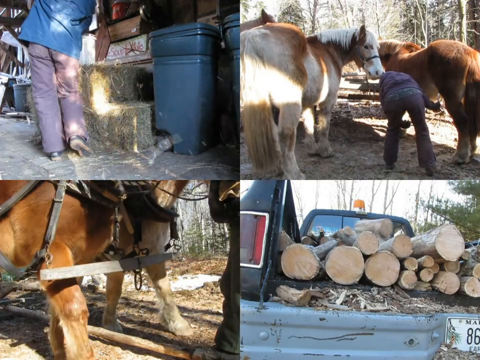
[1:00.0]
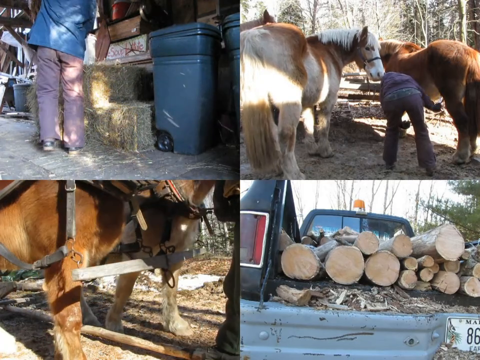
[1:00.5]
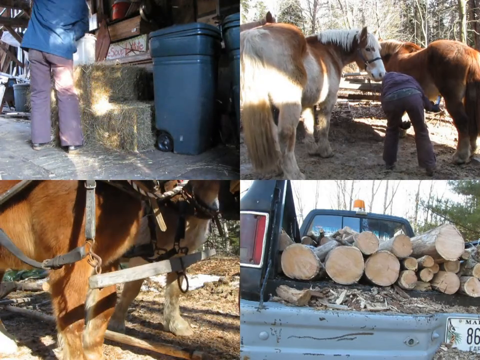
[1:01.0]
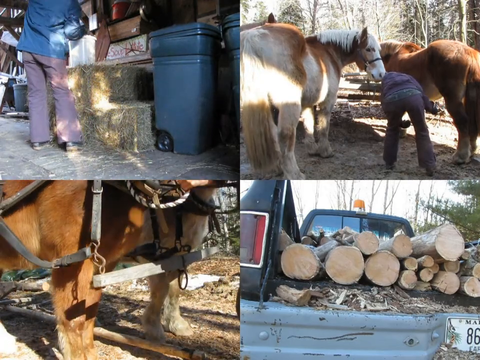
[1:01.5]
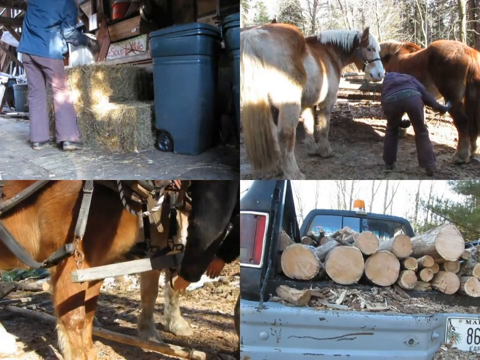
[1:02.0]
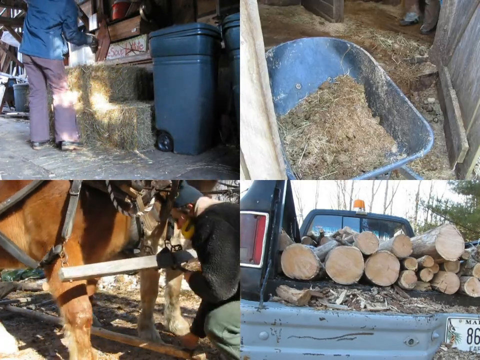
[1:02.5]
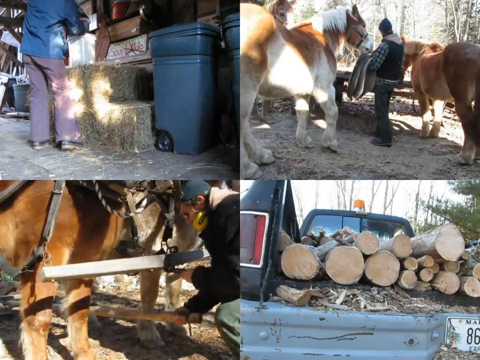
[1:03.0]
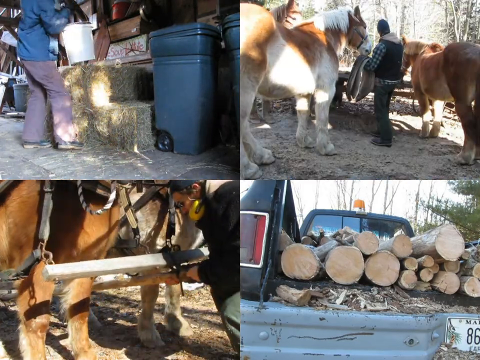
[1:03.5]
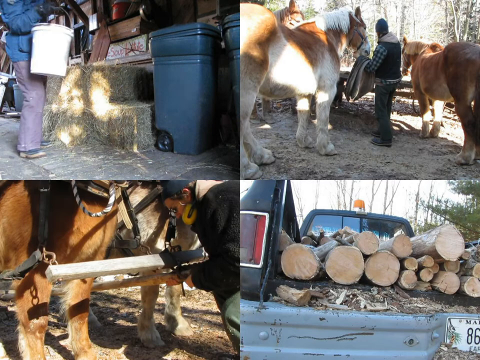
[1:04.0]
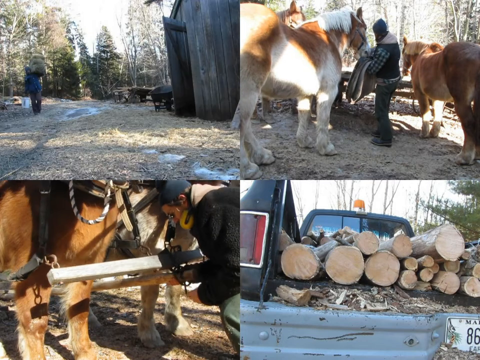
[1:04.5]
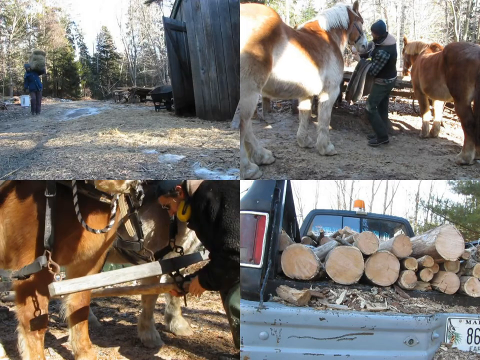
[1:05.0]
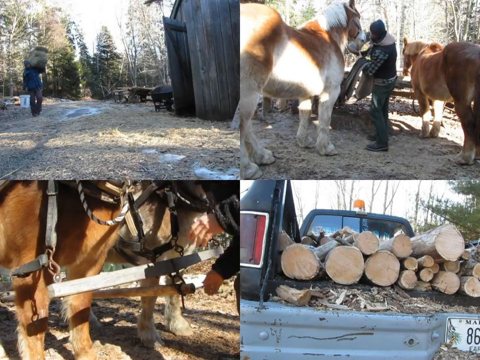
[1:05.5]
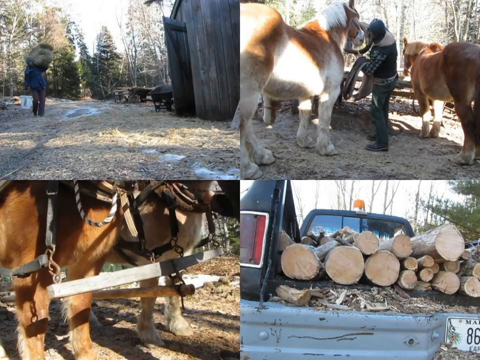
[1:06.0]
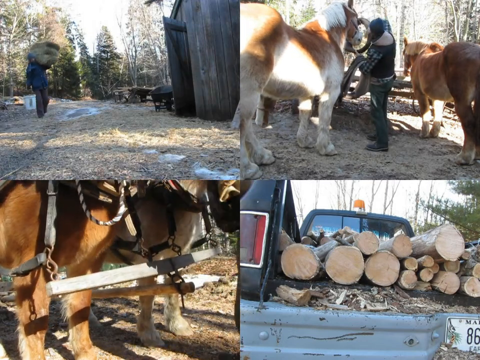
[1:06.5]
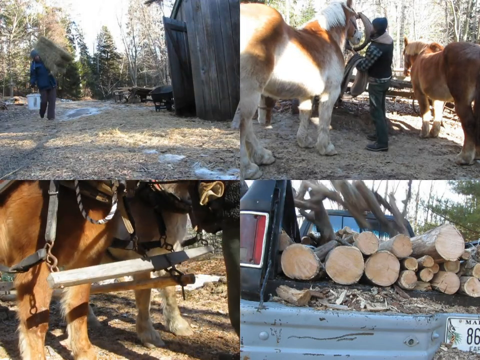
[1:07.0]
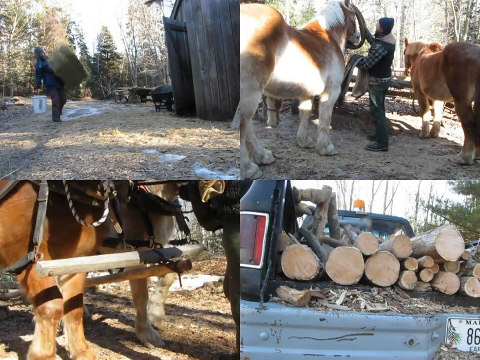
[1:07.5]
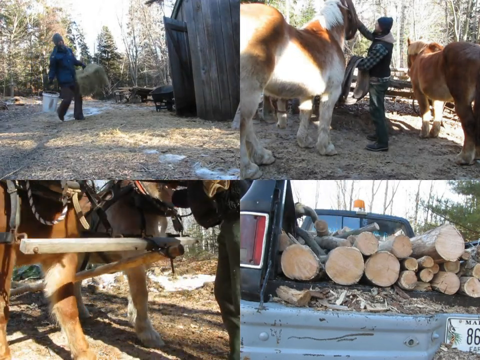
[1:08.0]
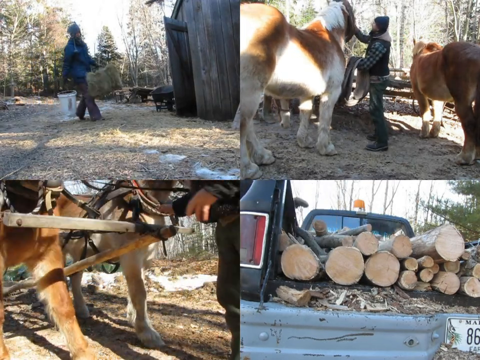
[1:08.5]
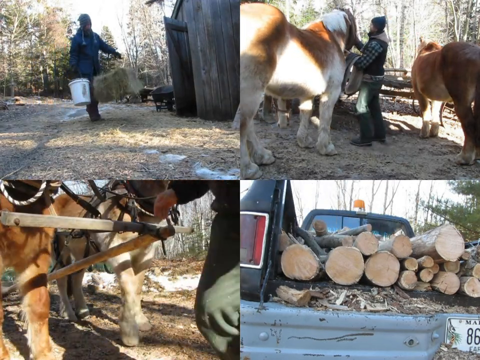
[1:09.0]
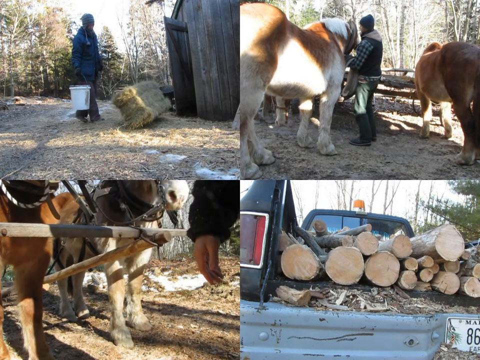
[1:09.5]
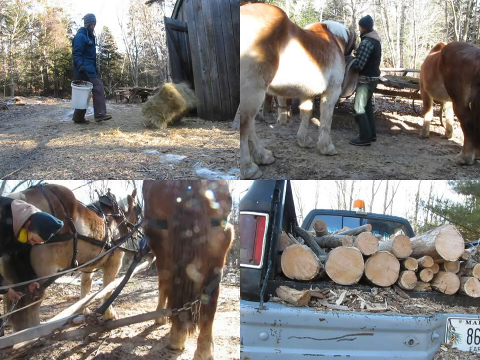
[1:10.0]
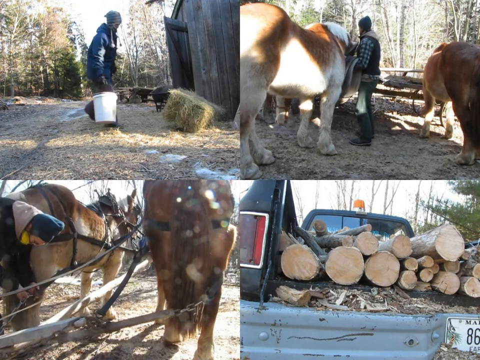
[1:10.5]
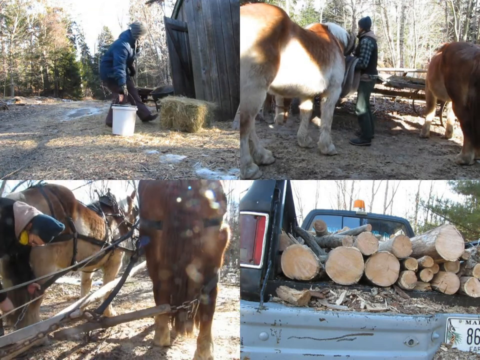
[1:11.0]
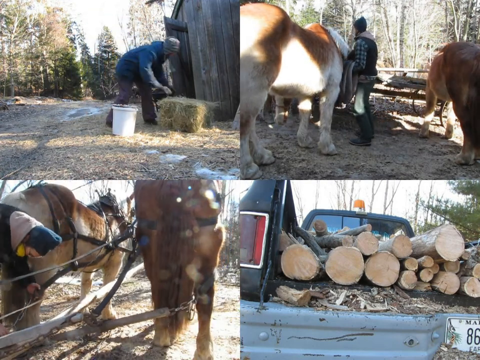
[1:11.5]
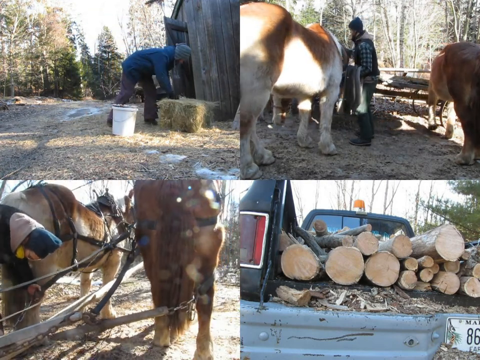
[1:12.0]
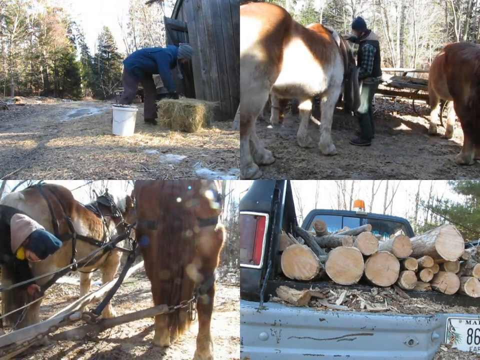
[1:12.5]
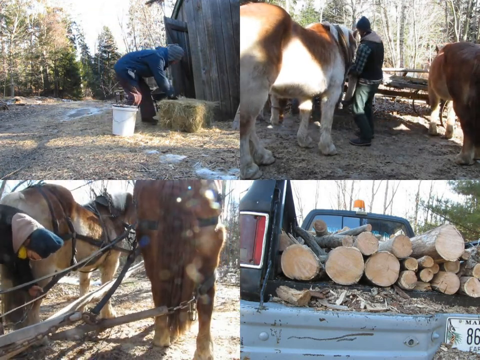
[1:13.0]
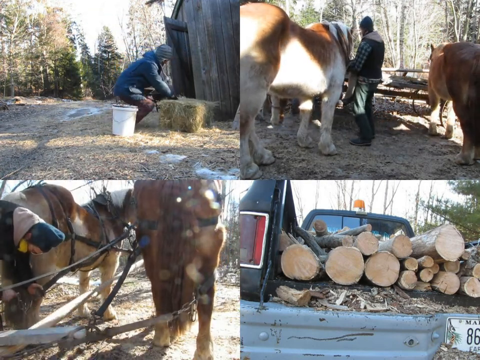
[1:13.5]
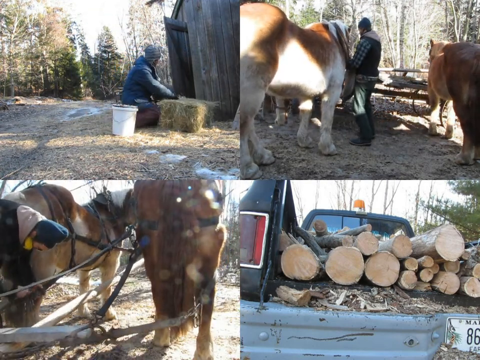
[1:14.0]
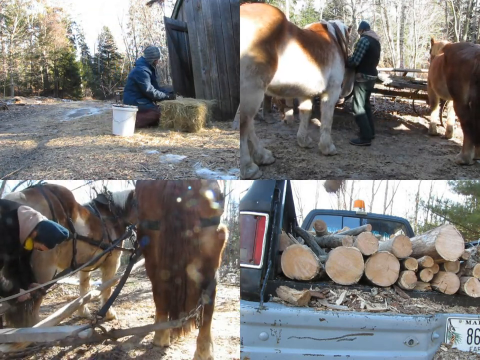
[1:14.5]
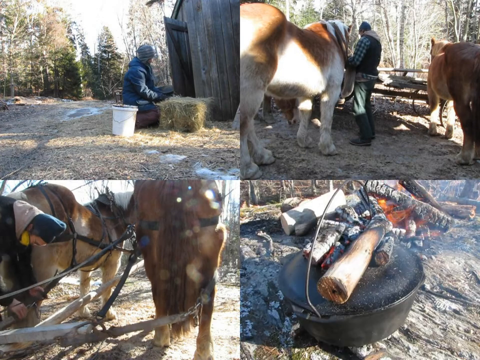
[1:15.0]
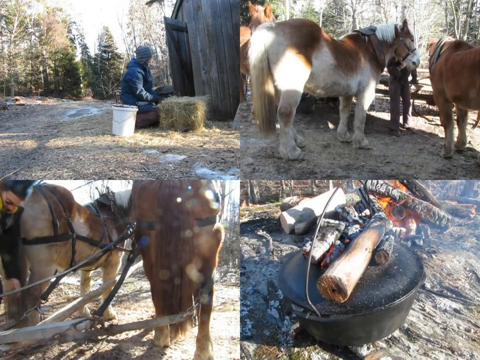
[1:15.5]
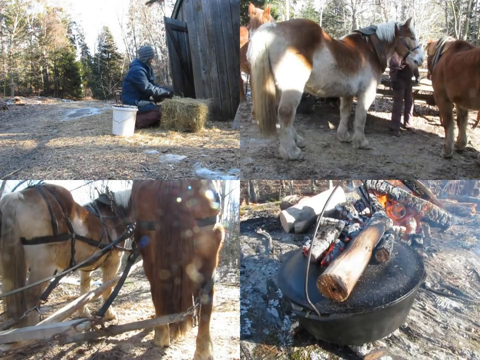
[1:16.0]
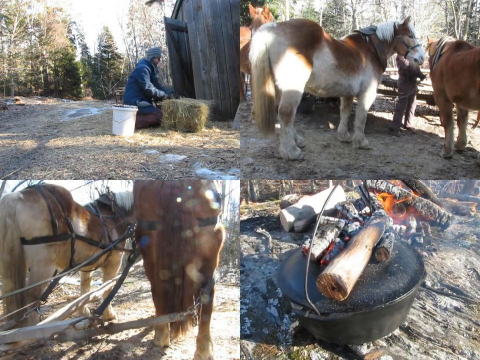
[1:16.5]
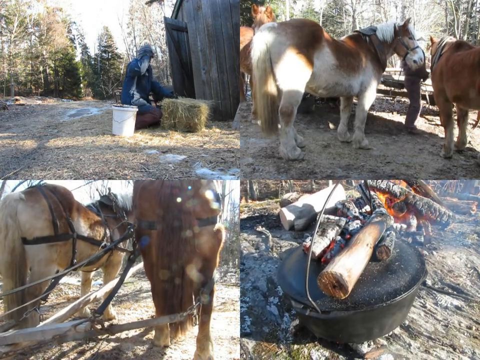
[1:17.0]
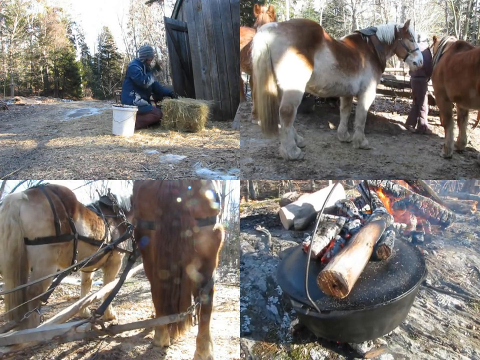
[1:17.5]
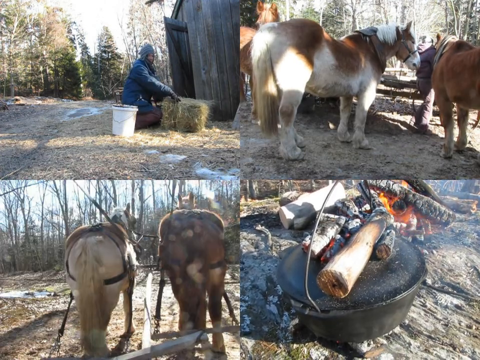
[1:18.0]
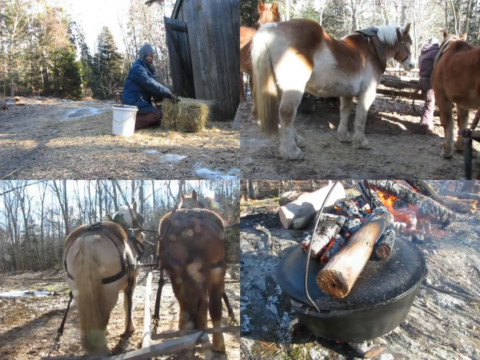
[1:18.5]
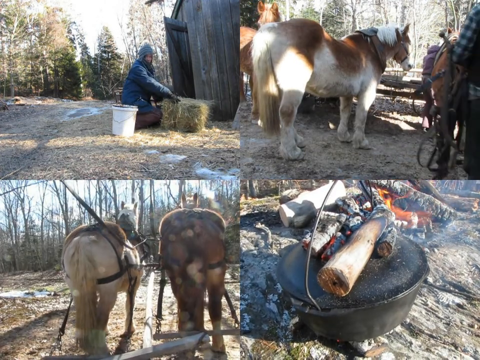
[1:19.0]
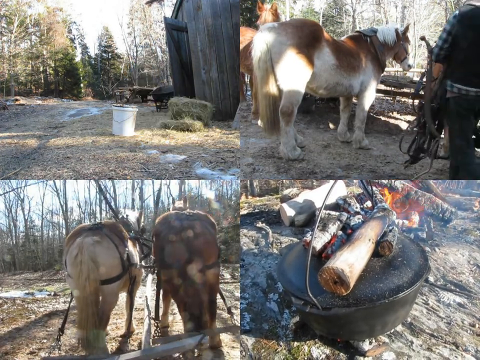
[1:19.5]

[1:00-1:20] The woman has lifted one of the hay bales. In the top right, the brown horse and the white horse are standing there, and the woman in the purple outfit who was grooming the brown horse is for the moment the only person in that section. The bottom left shows the bottom part of a brown horse with a harness on, and the bottom right shows the bed of a black truck holding many cut pieces of wood. The top right cuts to a wheelbarrow that looks full of either manure or some sort of garden trash, and then back to the horses. The top left shows the woman out in the field carrying the hay bale and a white bucket. In the bottom right, someone dumps more wood into the back of the black truck, and the bottom left zooms out to show two horses harnessed to a piece of wood, most likely for pulling a cart. It then cuts to a back view of the two horses harnessed to the cart while the other three videos stay the same. The bottom right switches to the black kettle covered in charred pieces of wood that appear still hot, with red embers. The back view of the two horses attached to the cart shows someone holding the reins, which hang down and move a little. In the top right, the two horses are there with a man, and the woman is gone. The woman with the hay then throws the bale on the ground, puts the bucket down, and appears to untie the string around the hay bale.